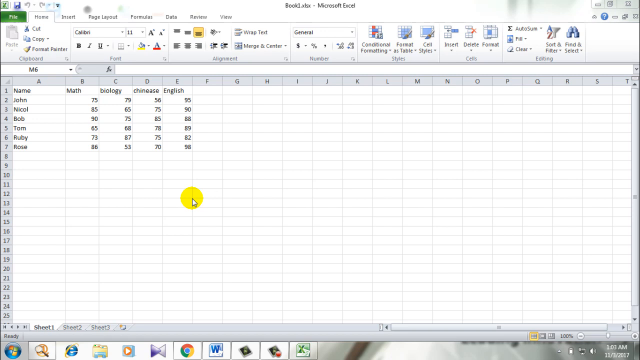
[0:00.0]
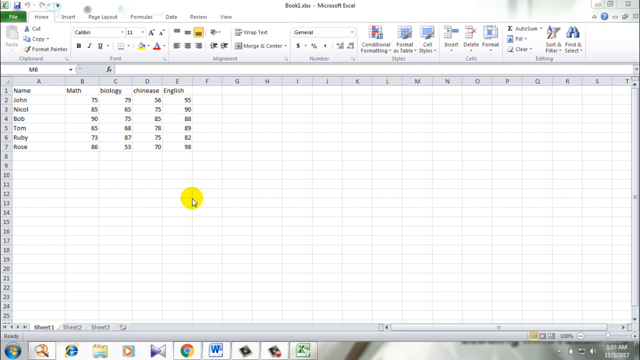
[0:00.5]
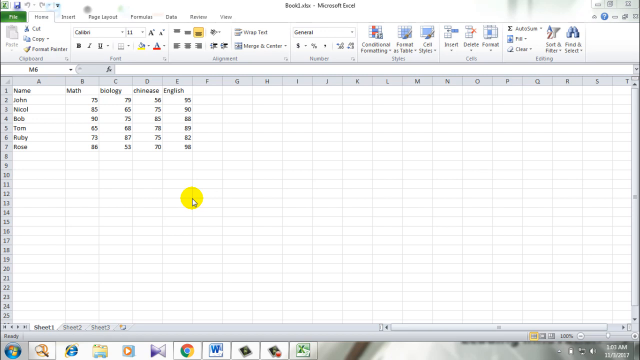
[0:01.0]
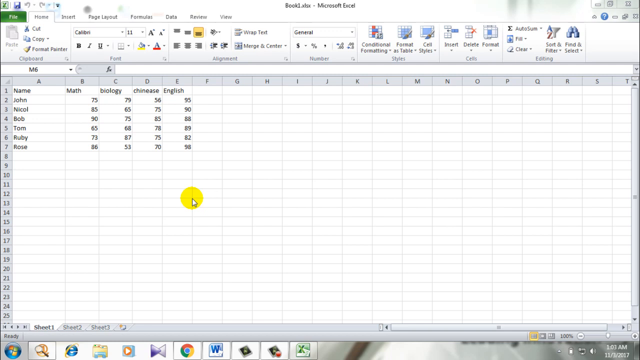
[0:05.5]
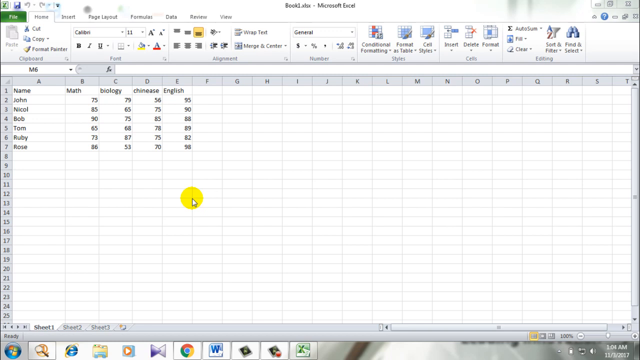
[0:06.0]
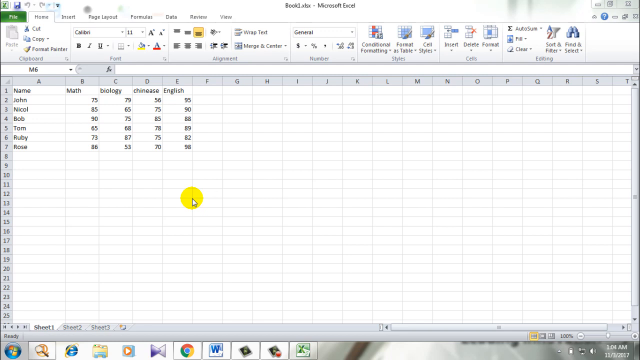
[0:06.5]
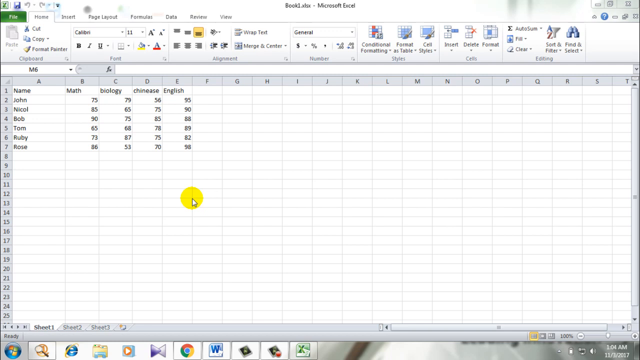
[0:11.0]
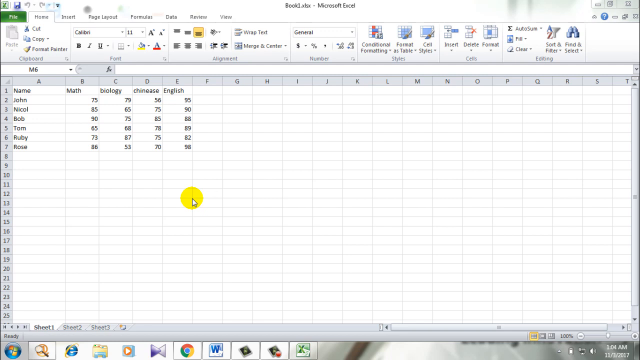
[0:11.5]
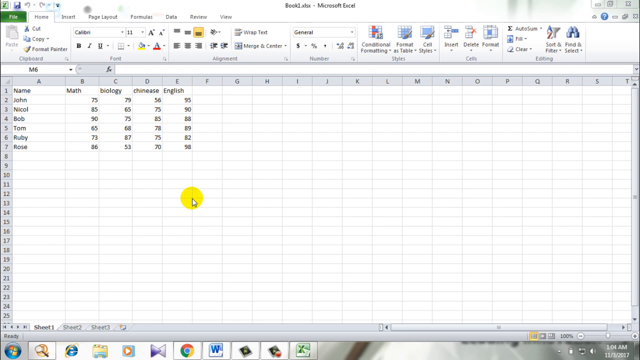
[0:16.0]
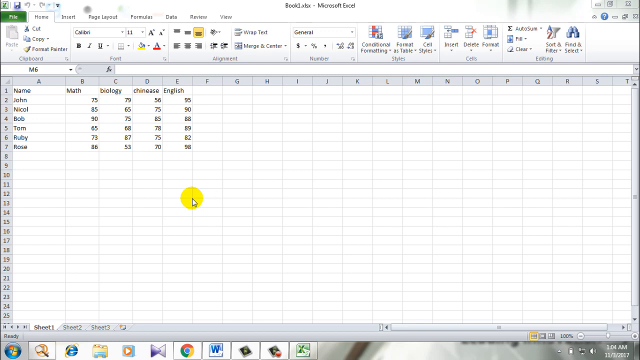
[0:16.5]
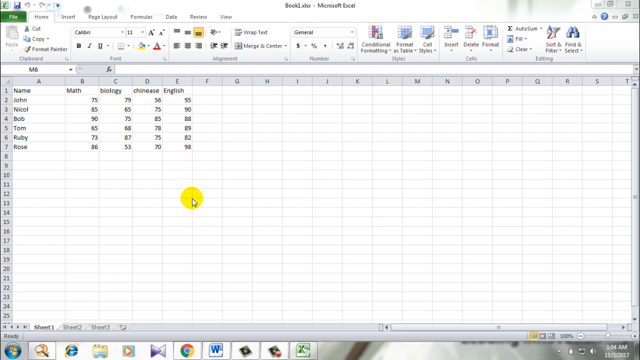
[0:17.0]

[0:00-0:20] A Microsoft Excel workbook called Book 1 is open, showing what looks like a very simple table with five columns and seven rows. The data appears to be student scores in different subjects: column A is a name column, followed by math, biology, Chinese and English columns. The name column lists John, Nicole, Bob, Tom, Ruby and Rose. A yellow circle surrounds the mouse cursor so it is easy to follow, suggesting this is apparently a tutorial on doing something in Excel.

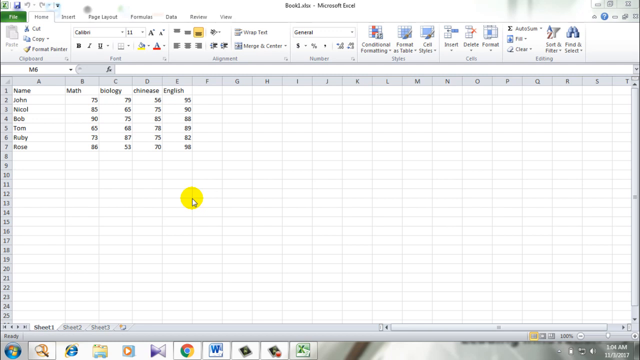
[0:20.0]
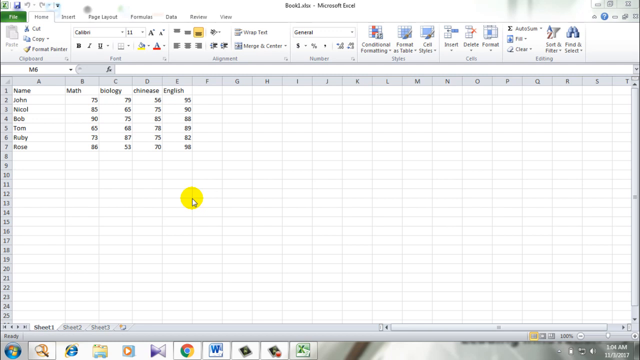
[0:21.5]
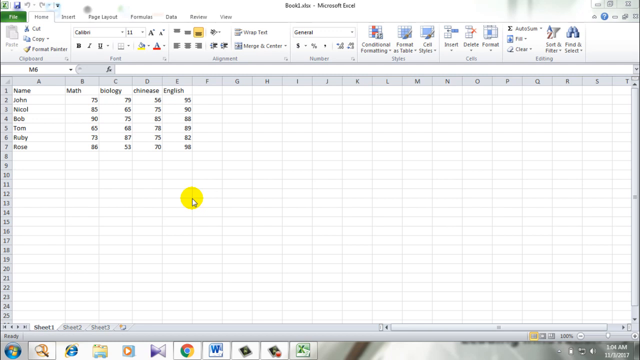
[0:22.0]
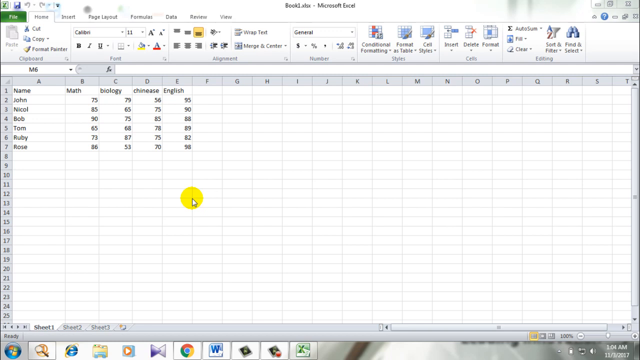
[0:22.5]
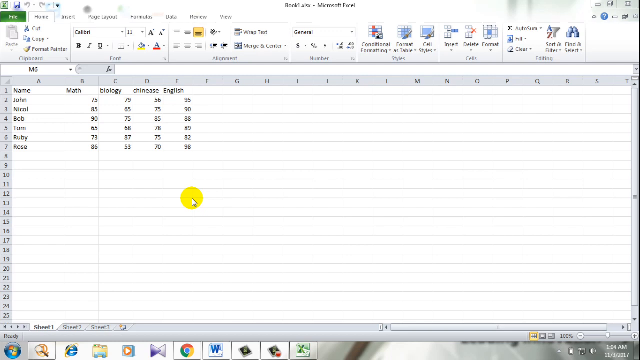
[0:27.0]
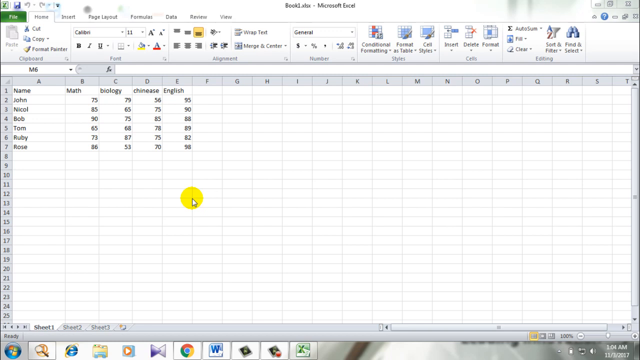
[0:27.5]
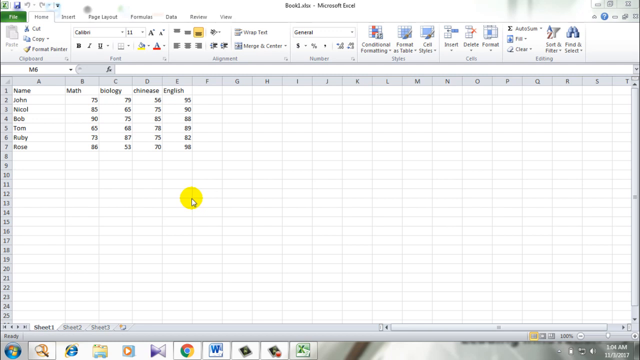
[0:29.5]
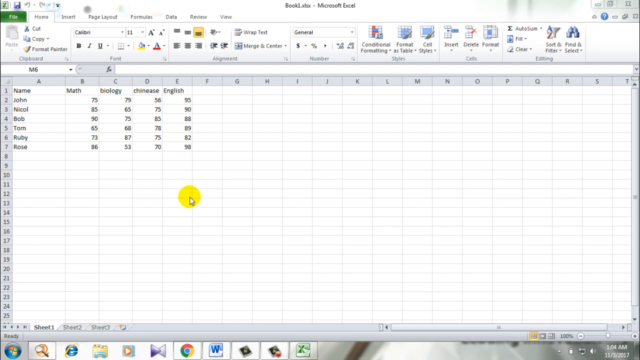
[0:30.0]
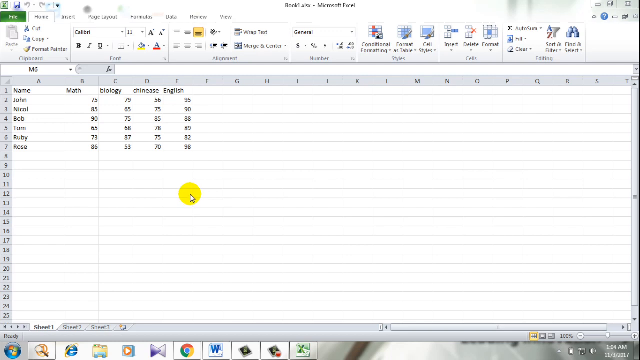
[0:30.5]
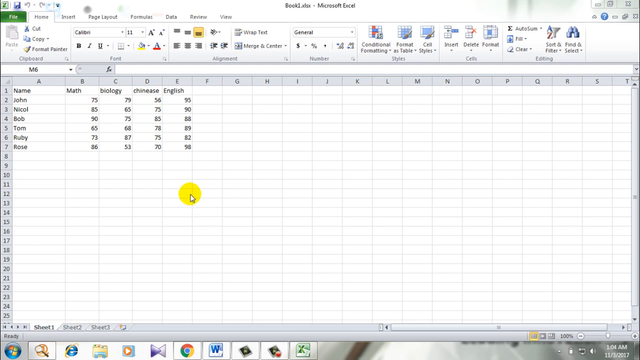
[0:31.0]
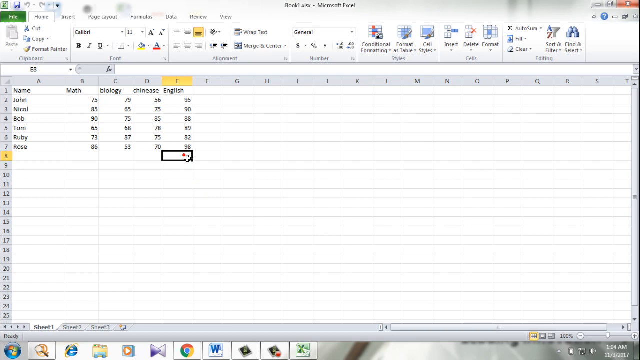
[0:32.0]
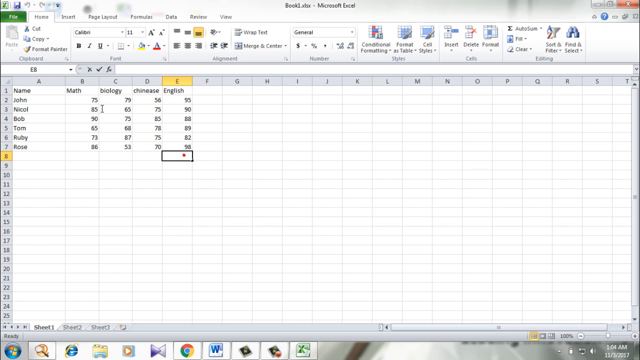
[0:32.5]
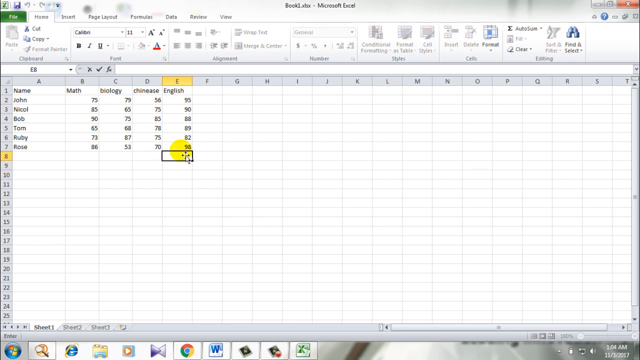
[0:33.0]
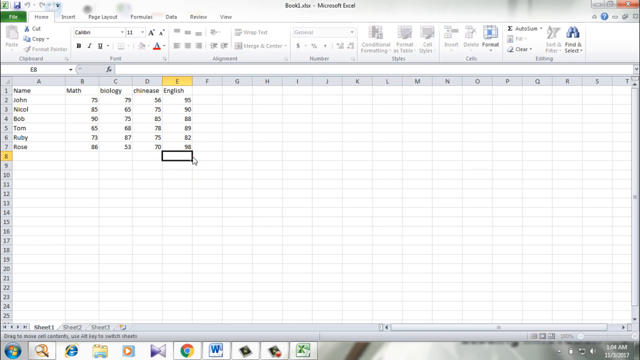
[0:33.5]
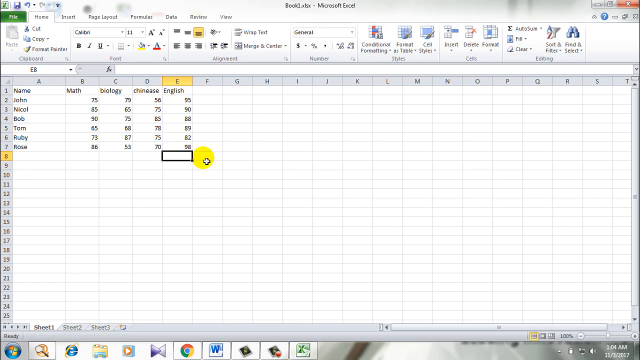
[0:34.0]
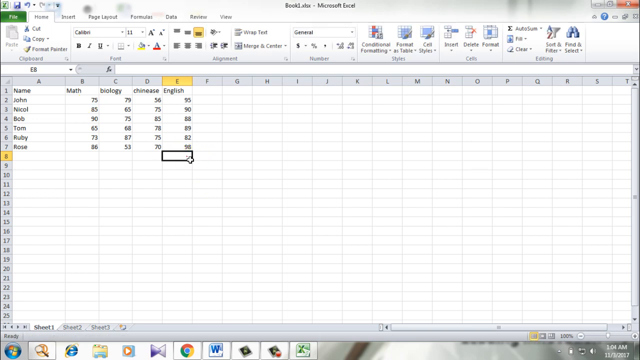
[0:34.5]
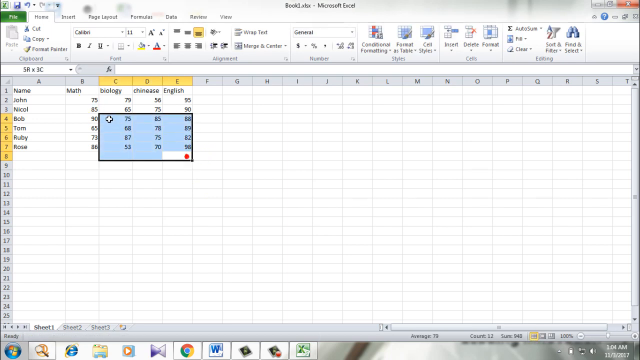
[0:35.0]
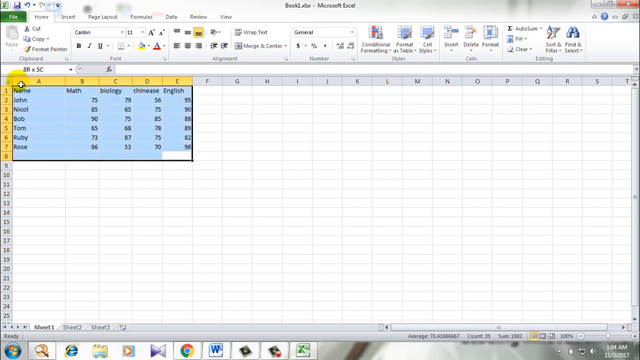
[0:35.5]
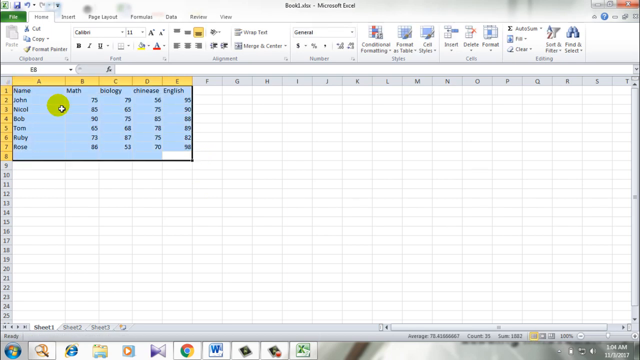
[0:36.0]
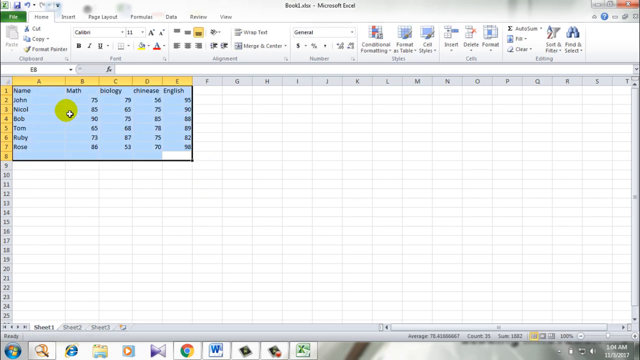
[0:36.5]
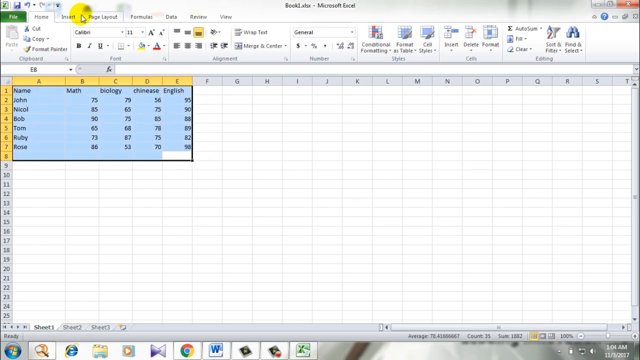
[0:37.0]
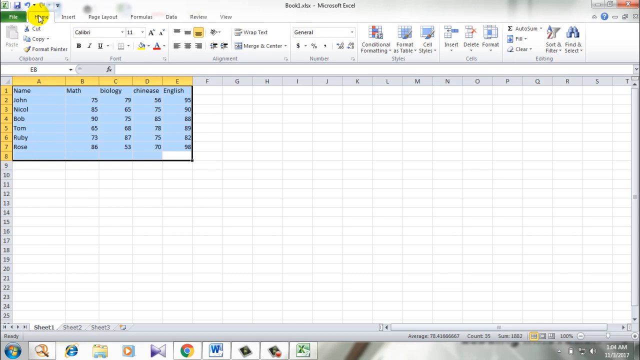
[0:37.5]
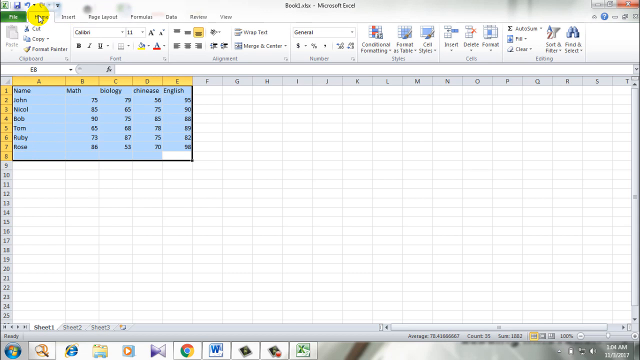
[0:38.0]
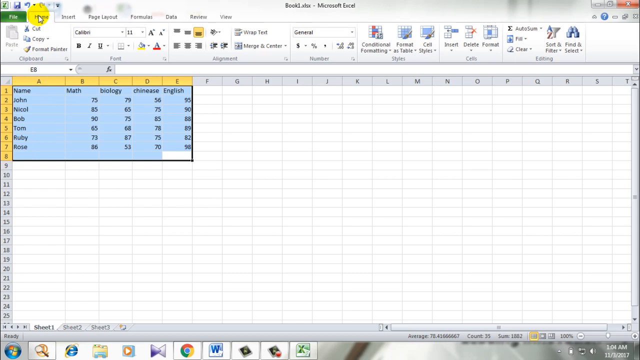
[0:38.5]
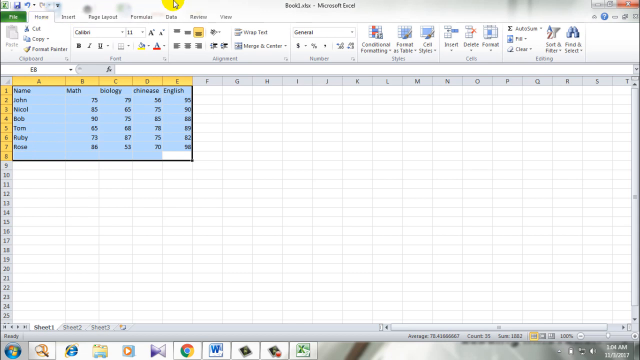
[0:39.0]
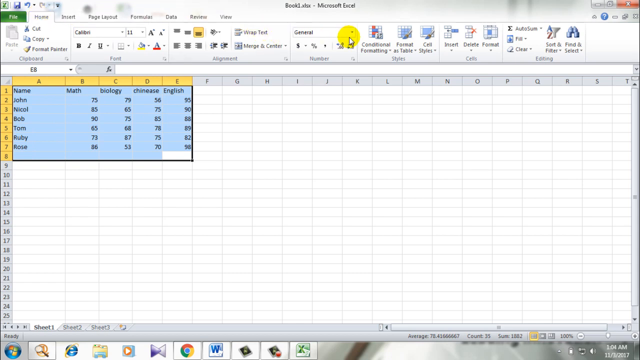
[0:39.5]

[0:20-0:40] The same table of student scores is shown, five columns wide and seven rows down, with math, biology, Chinese and English columns; the scores appear to range from 70 to 98. The cursor has a yellow highlight. He clicks on cell E8 at the bottom, and each click is marked by a big, almost explosion-looking animation. He then highlights from cell E8 all the way up to A1, selecting the entire table plus one row underneath it.